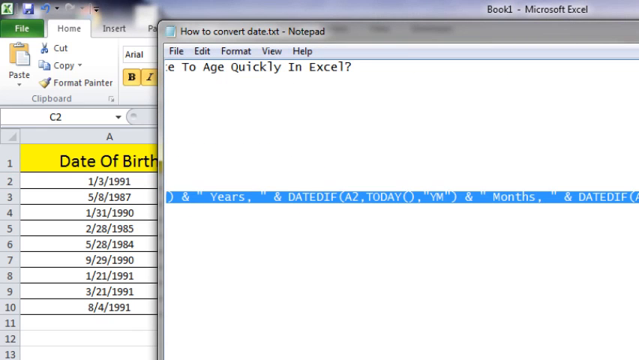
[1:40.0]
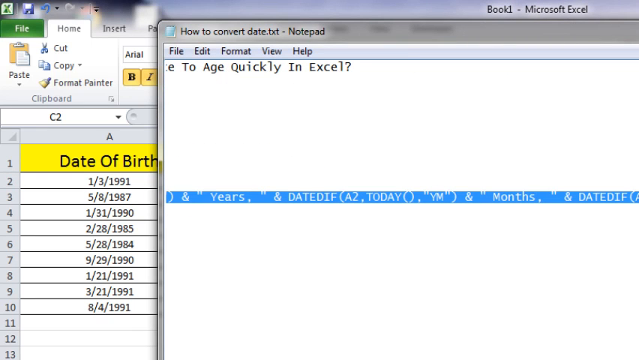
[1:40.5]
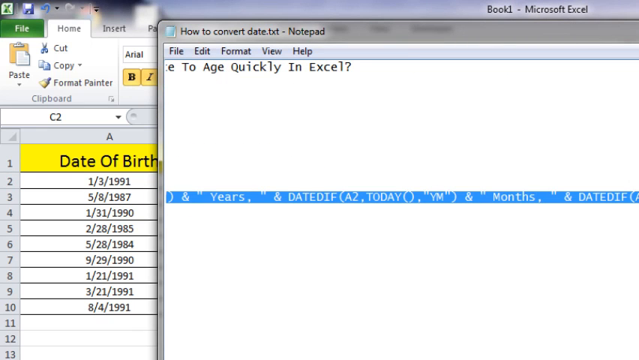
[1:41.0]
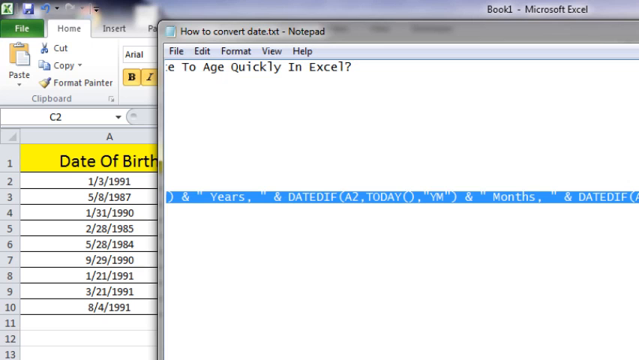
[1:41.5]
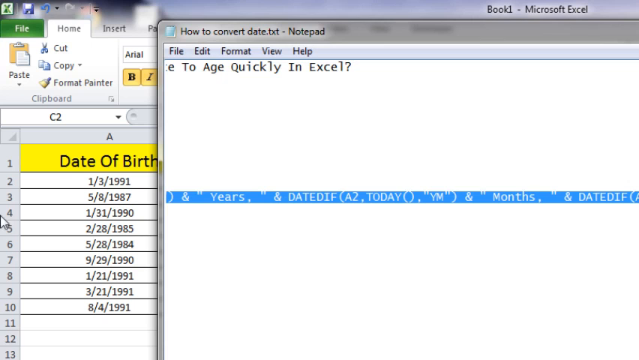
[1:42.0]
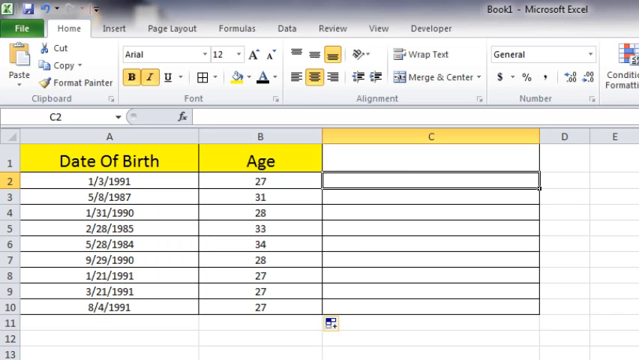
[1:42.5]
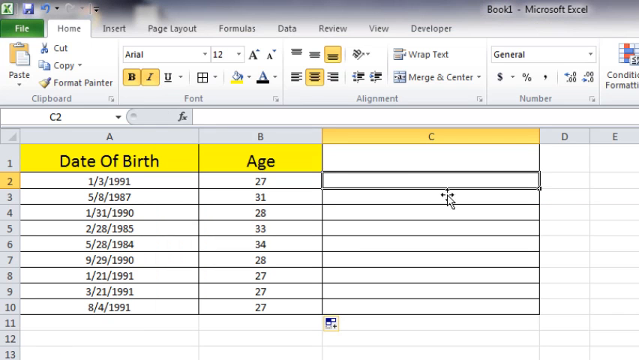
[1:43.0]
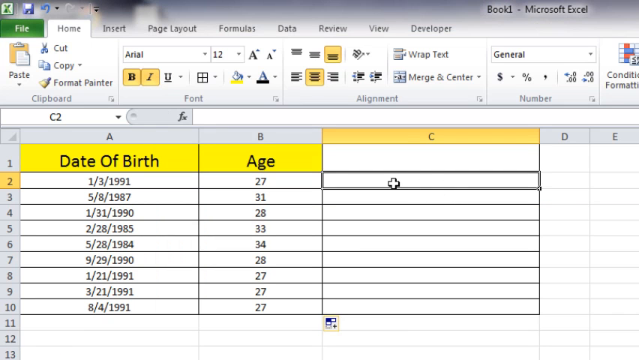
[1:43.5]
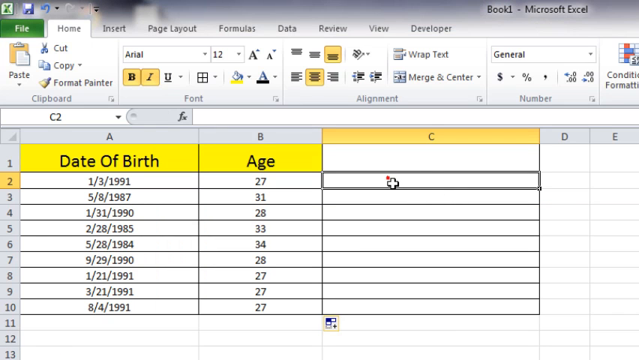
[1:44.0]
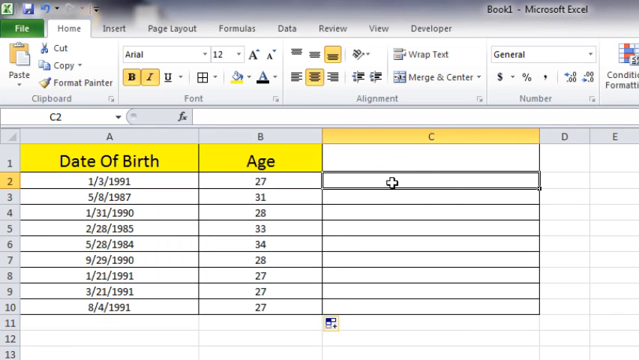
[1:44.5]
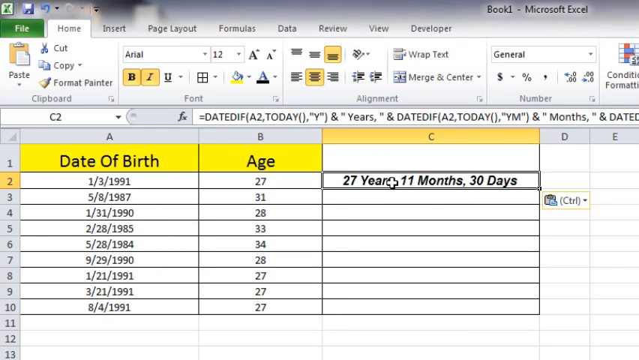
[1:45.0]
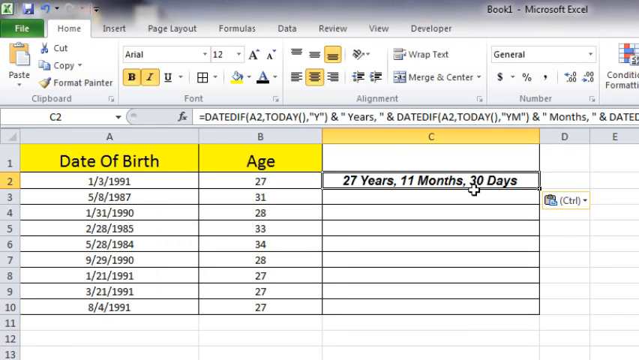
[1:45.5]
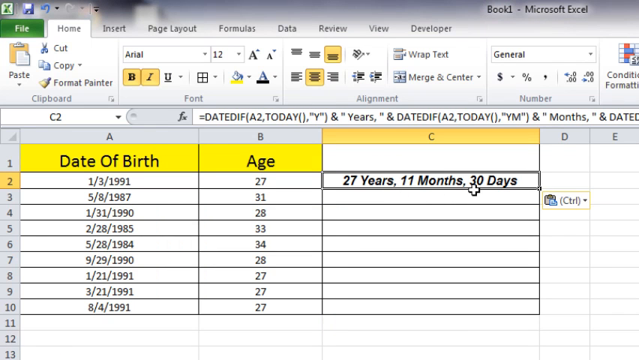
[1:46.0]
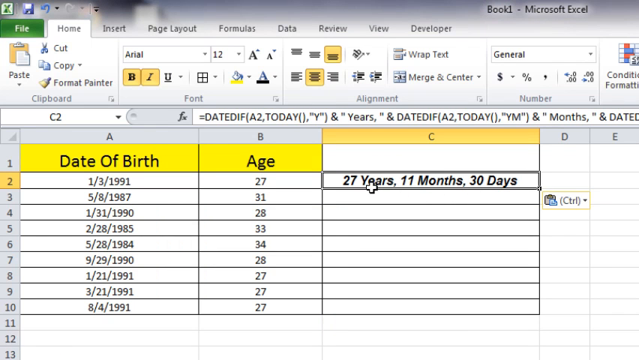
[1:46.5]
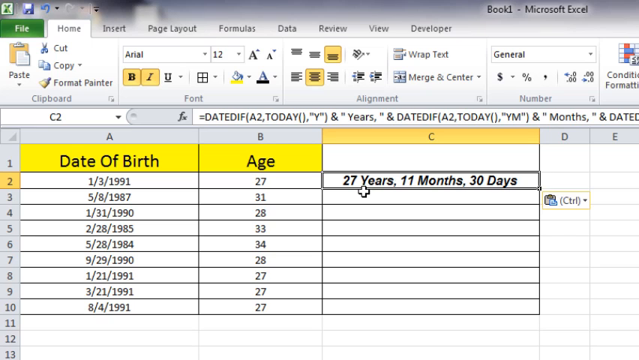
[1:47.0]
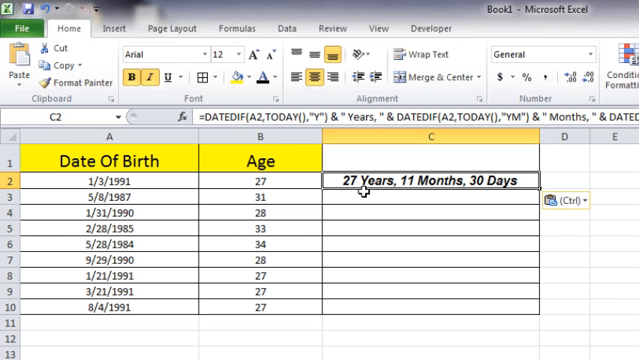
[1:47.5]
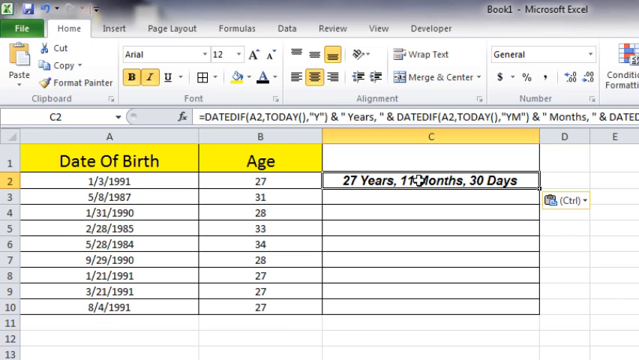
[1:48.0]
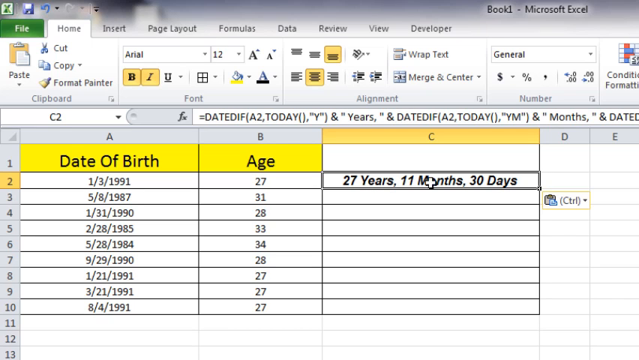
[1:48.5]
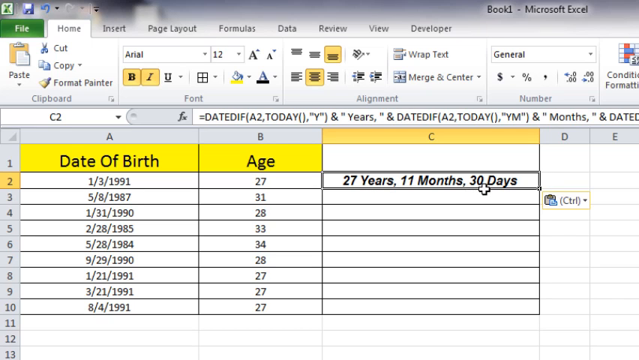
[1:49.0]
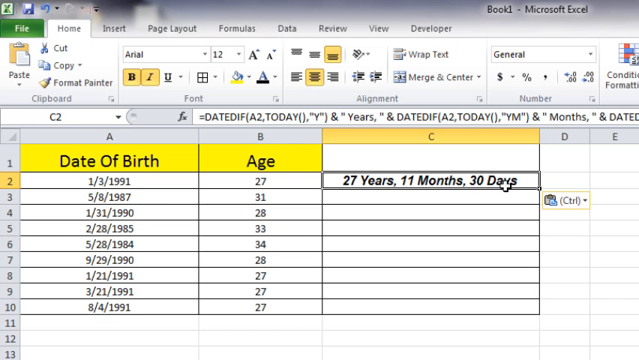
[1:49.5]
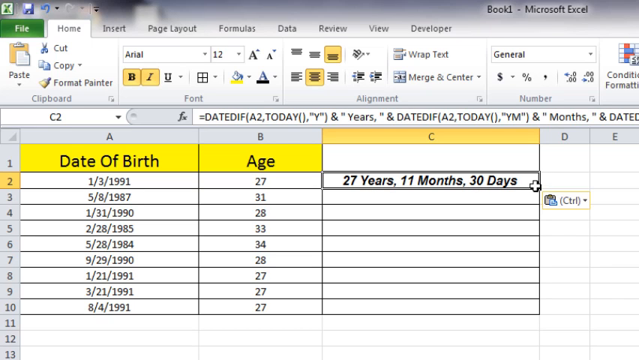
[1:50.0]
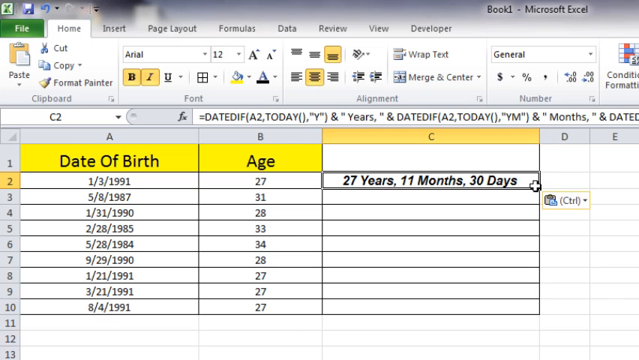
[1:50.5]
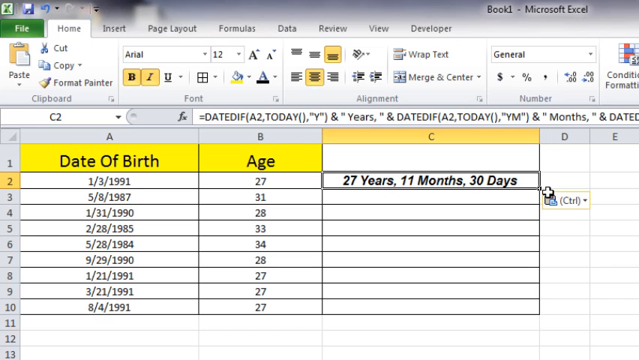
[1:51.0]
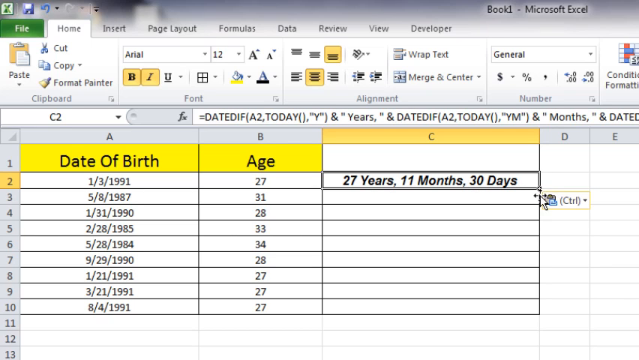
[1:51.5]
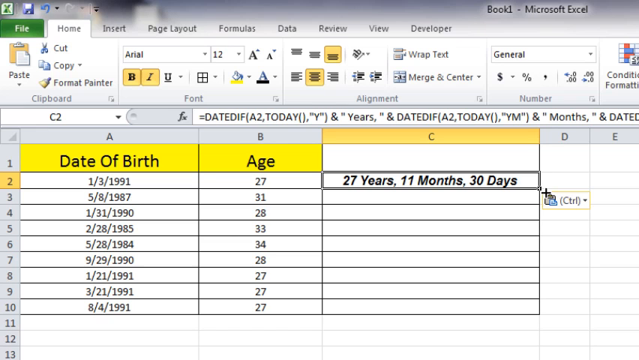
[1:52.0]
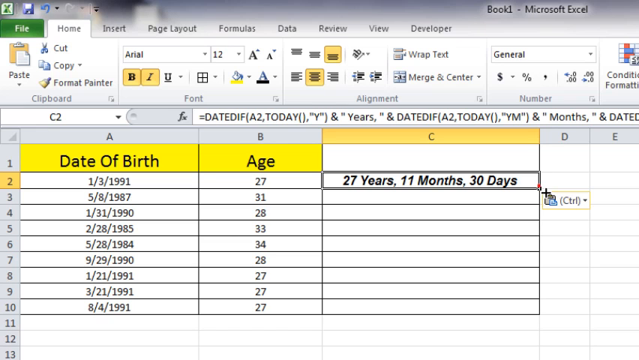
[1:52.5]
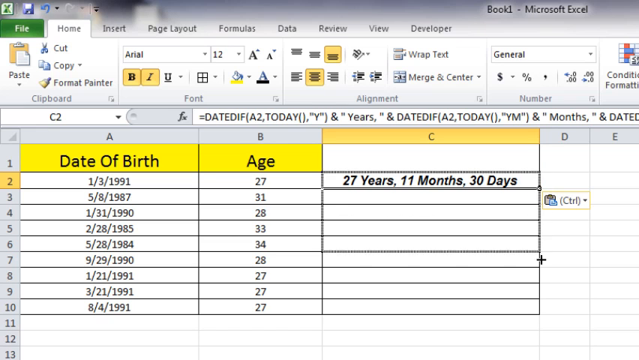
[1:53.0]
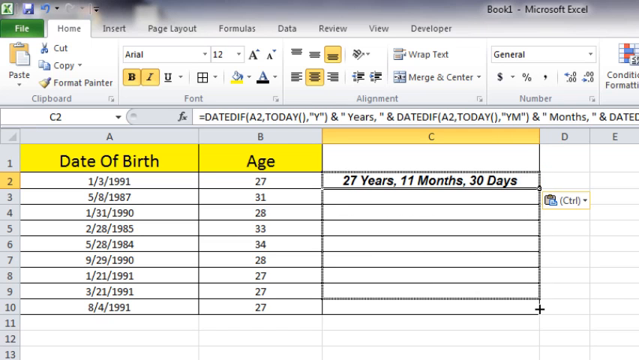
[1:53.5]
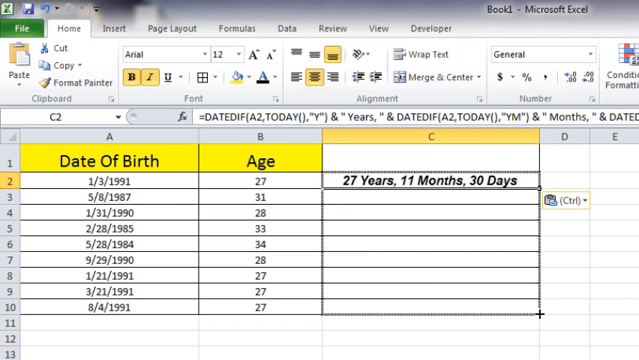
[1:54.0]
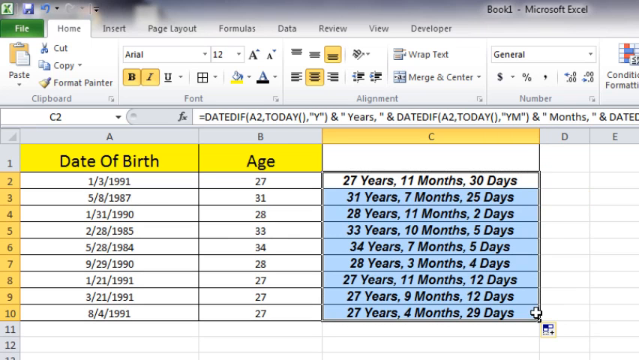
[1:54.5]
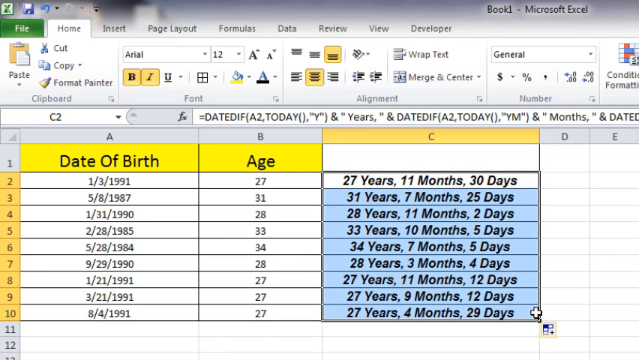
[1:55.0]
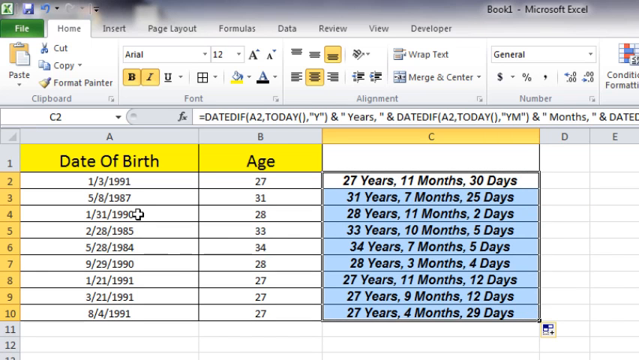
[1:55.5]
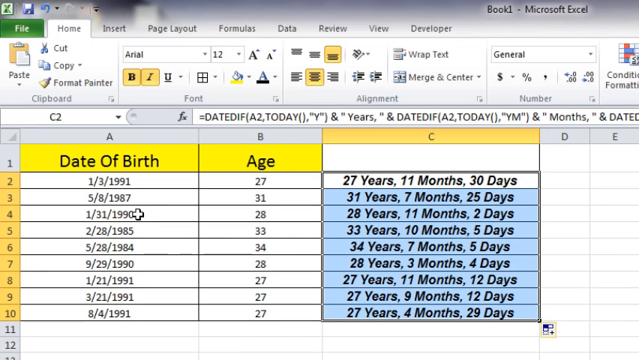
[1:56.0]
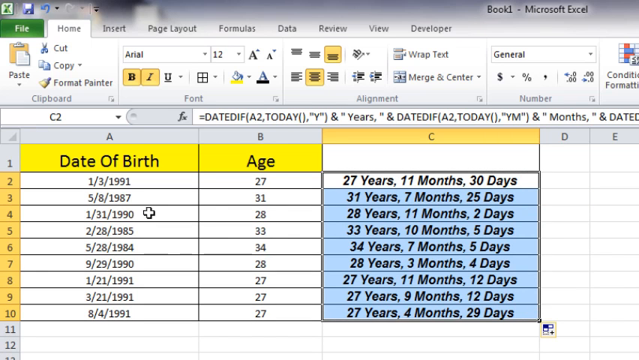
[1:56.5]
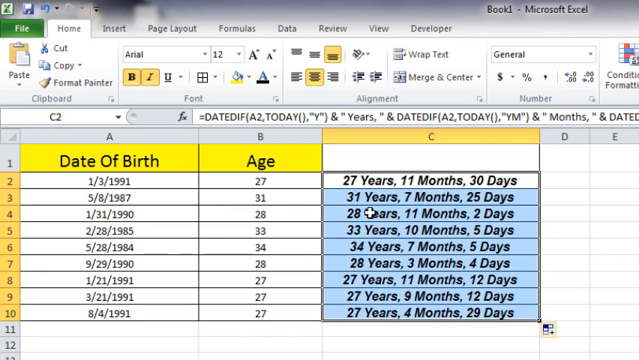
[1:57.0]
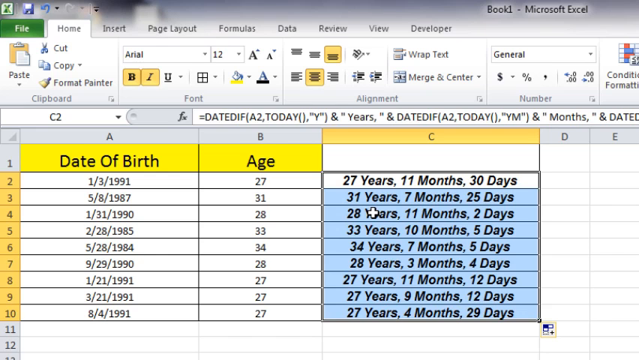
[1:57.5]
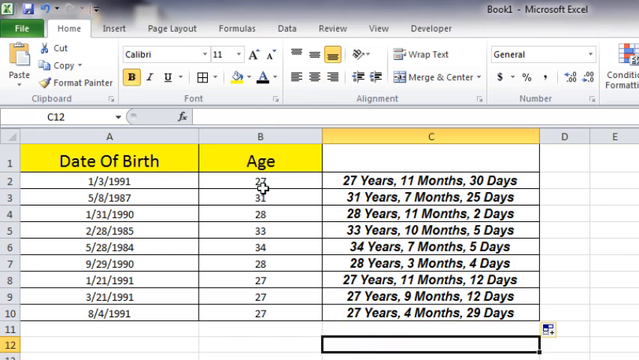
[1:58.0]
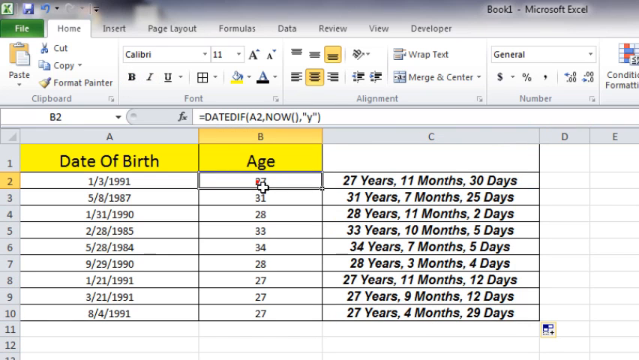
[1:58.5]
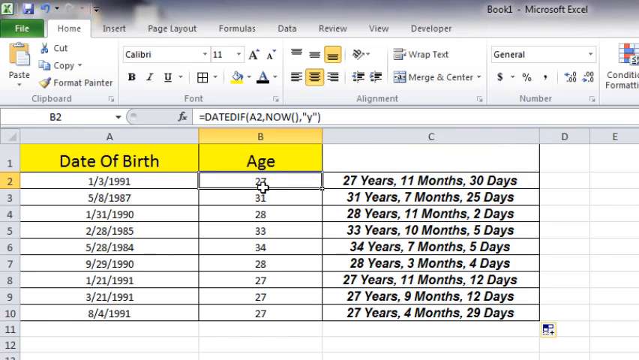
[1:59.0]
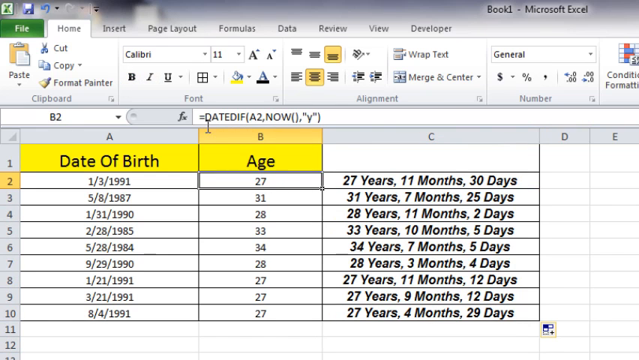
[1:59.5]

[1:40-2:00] The entire line of the formula is highlighted, and once it is entered into C2, the result is "27 years, 11 months, 30 days". The third parameter sets whether the value is years, months or days: y for years and ym for months; the view cuts off before the days parameter can be seen. The cursor is dragged down to auto-populate the rest of column C, which fills with values separated by commas: 31 years, 7 months, 25 days; 28 years, 11 months, 2 days; 33 years, 10 months, 5 days; 34 years, 7 months, 5 days; 28 years, 3 months, 4 days; 27 years, 11 months, 12 days; 27 years, 9 months, 12 days; and 27 years, 4 months, 29 days. There is some more clicking around.